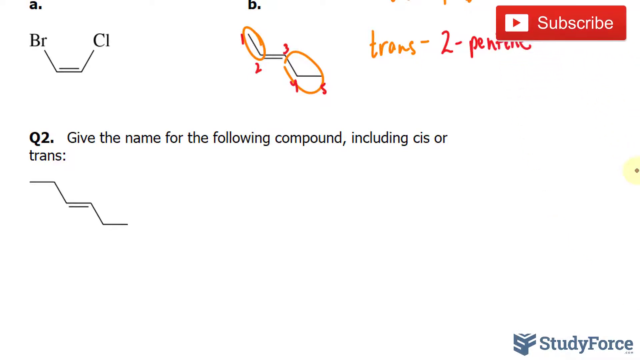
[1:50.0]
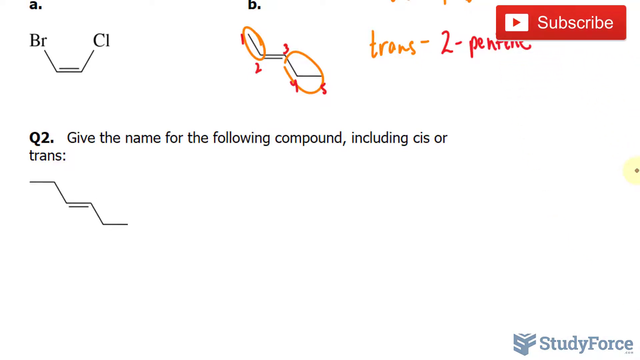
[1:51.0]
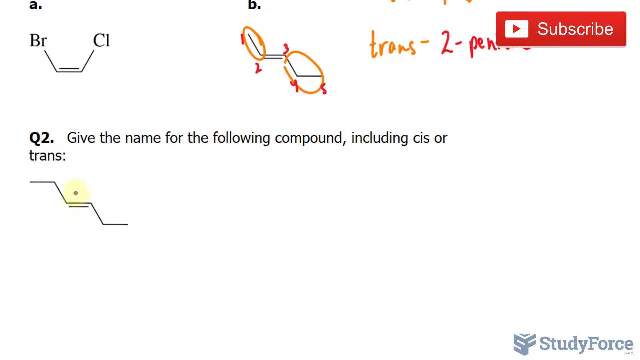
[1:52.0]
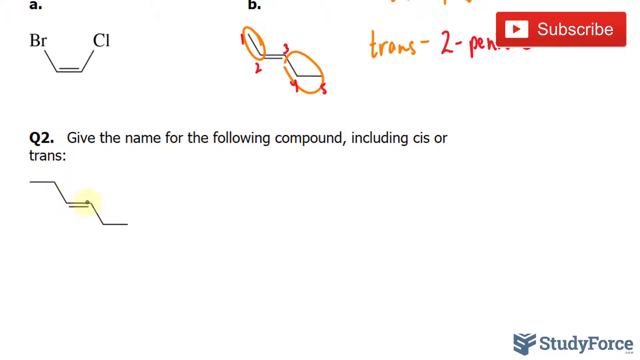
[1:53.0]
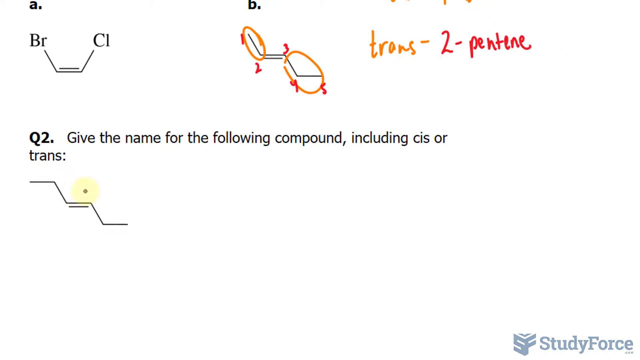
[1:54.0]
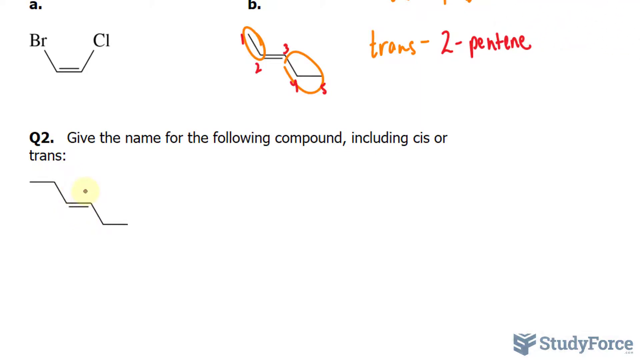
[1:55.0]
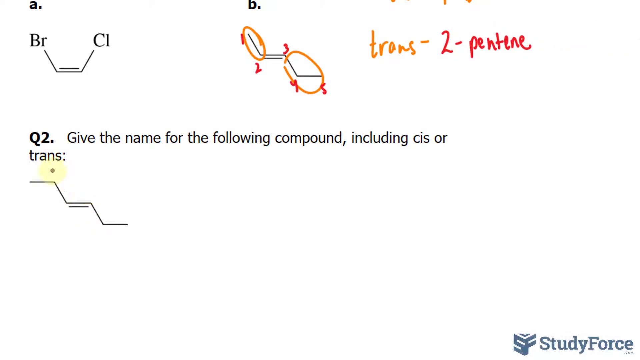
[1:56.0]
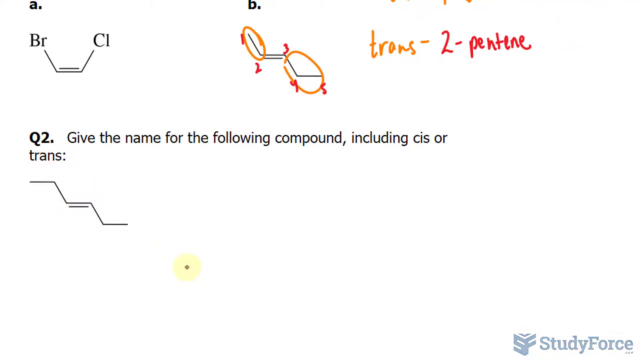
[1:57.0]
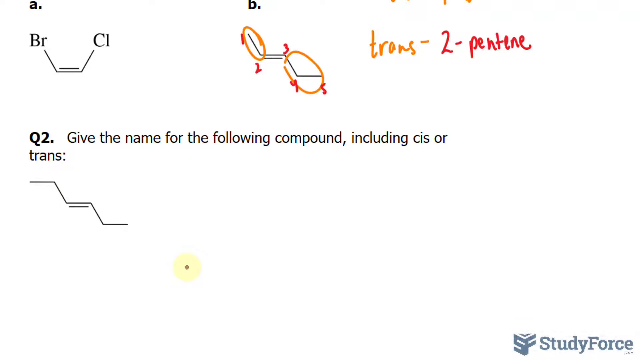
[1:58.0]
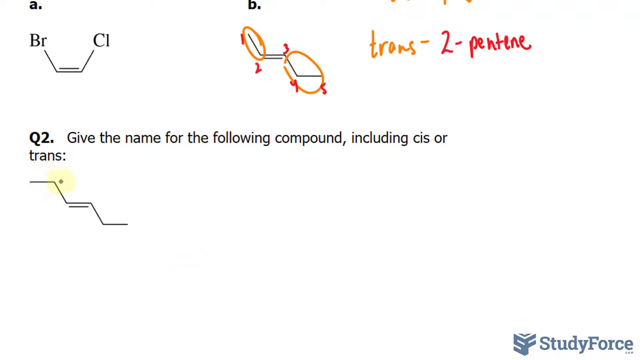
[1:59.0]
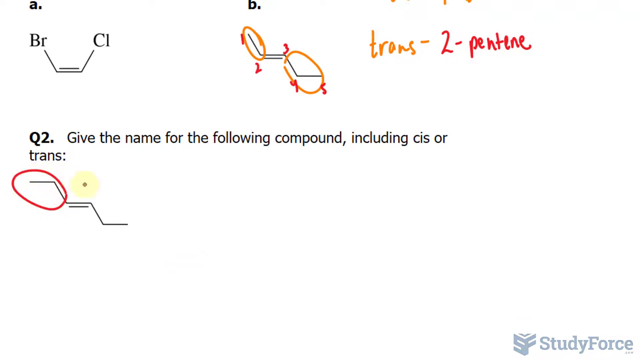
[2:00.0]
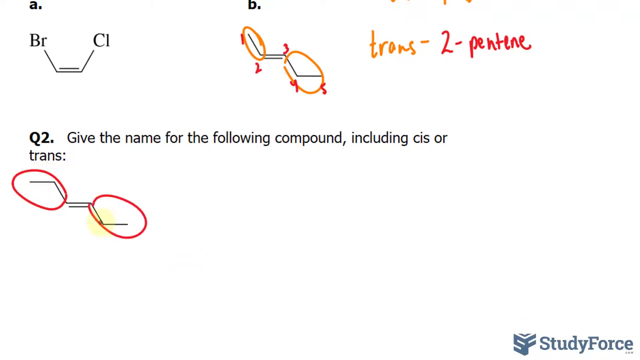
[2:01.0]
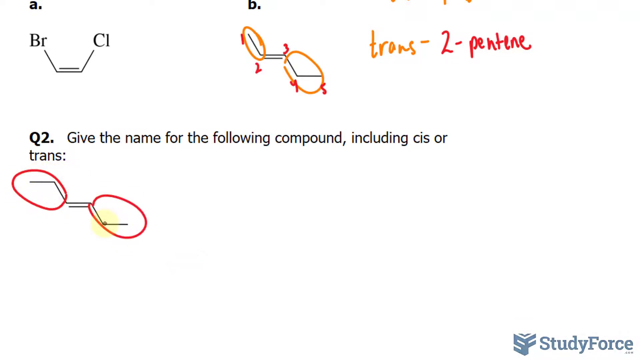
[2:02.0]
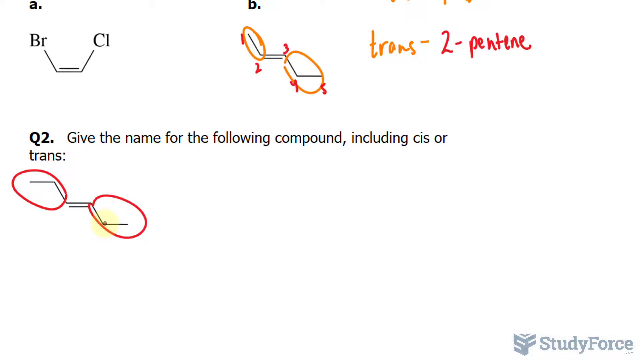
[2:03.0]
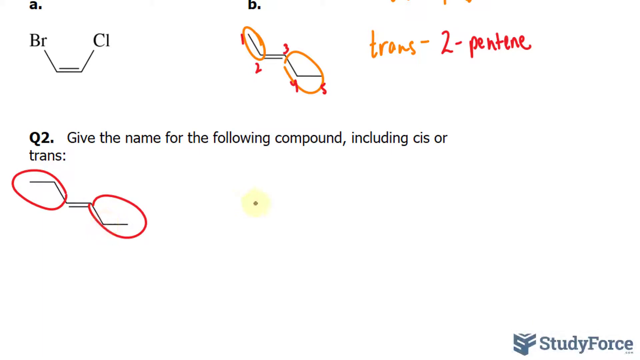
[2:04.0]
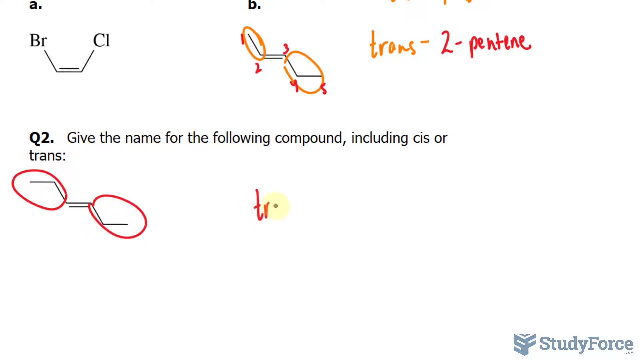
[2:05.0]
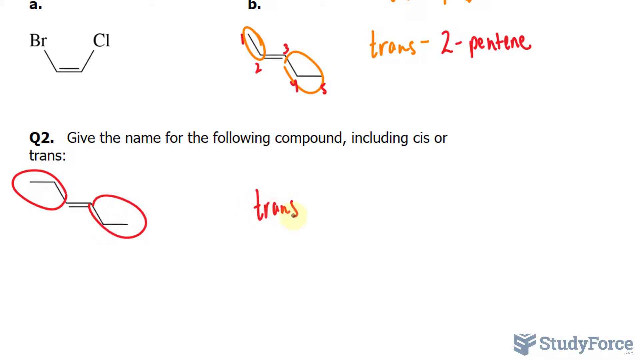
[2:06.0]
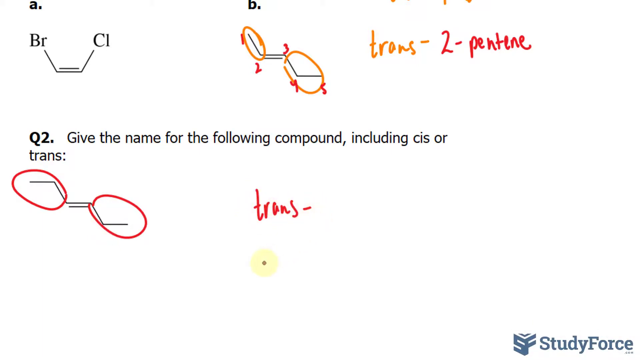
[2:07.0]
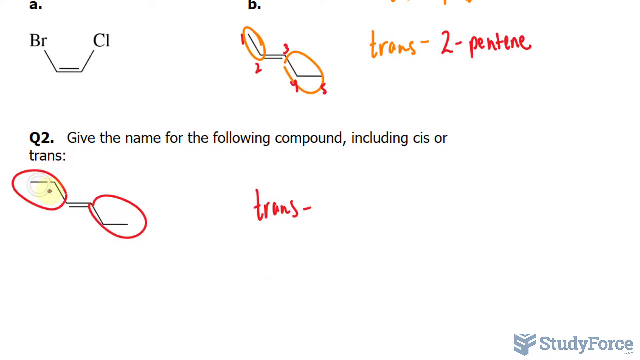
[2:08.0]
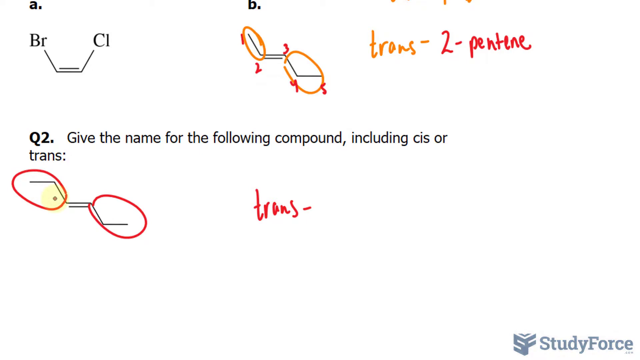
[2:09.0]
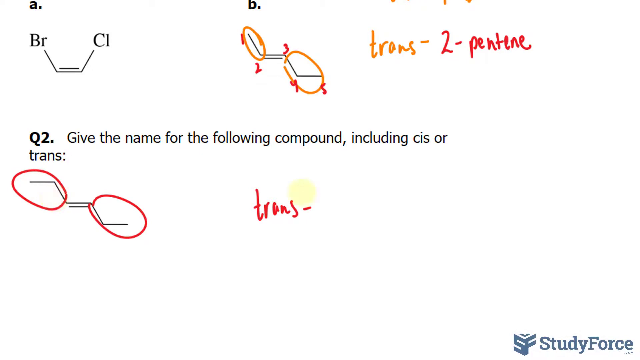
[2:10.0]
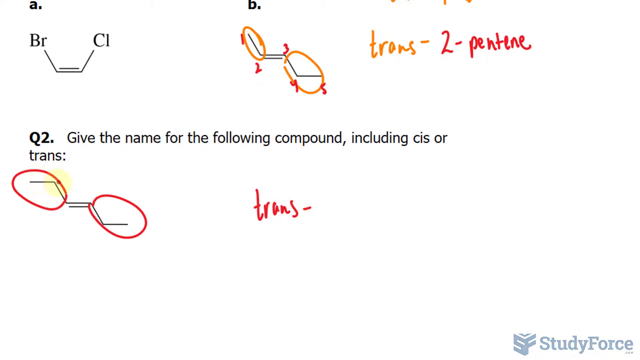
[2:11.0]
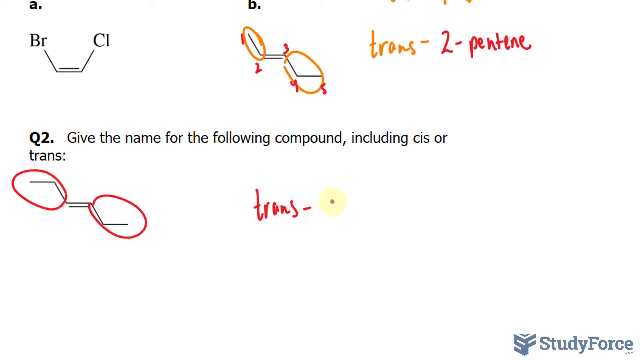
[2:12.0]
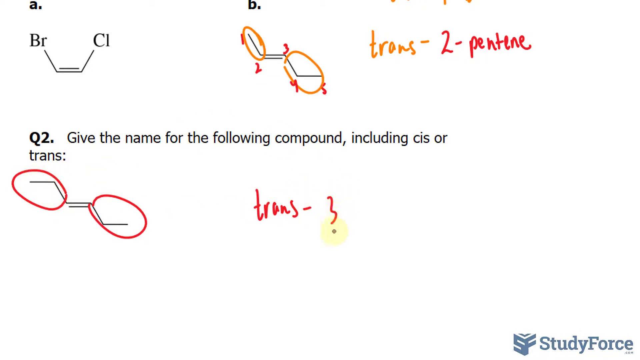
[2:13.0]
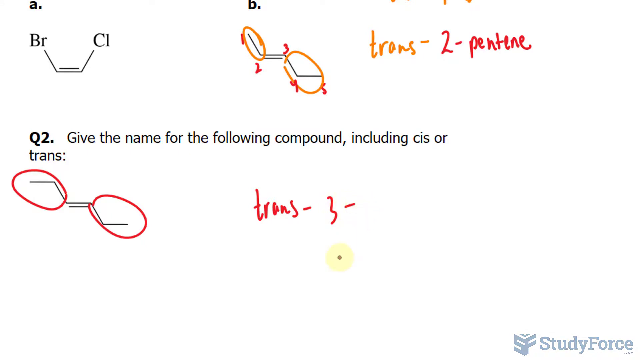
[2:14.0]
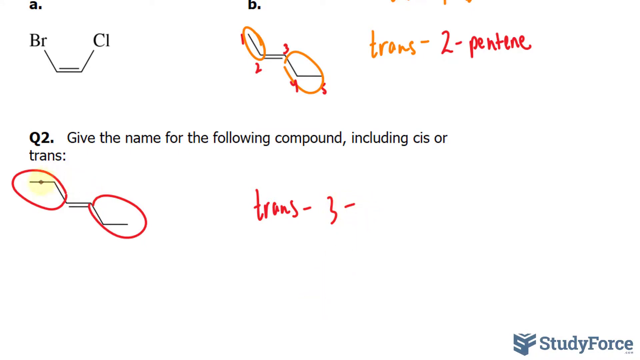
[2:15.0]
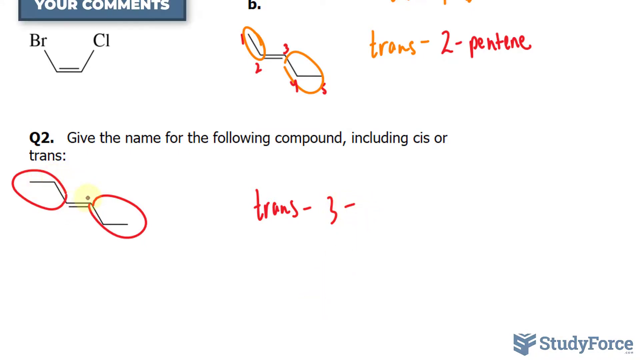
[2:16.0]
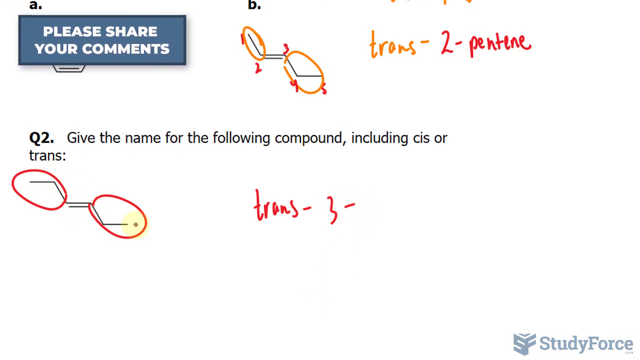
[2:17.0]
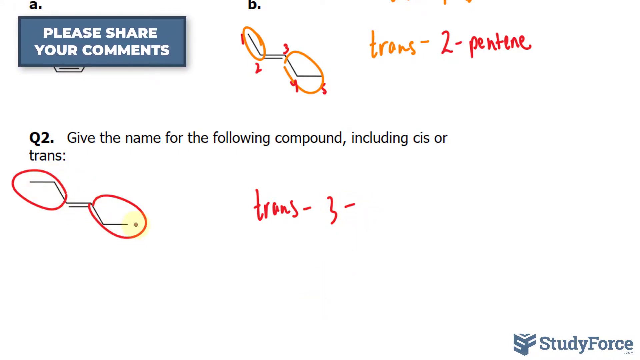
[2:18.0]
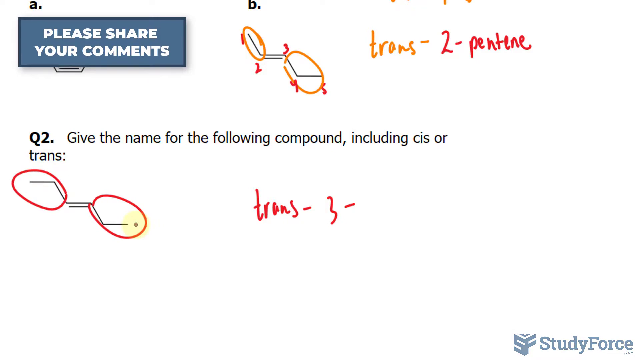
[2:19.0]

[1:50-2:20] In the first seconds, a small red banner with the white writing "SUBSCRIBE" is in the upper right corner; within a few seconds it rotates out of the frame. The cursor, formed by a very small central circle and a slightly larger yellow concentric circle, moves in the left part of the frame and, using red, circles two portions of the molecule located in the lower left of the frame; its movement speeds up while these portions are circled. After that, in the empty space to the right of the molecule, the cursor writes the word "TRANS" and the number 3, separated by a red line. The cursor's movement is quite fluid and easy to follow, and the video quality is particularly high.